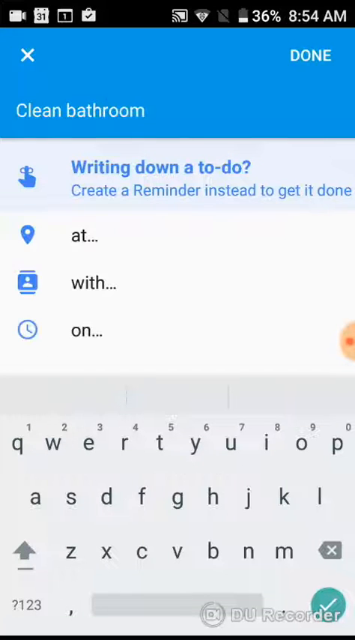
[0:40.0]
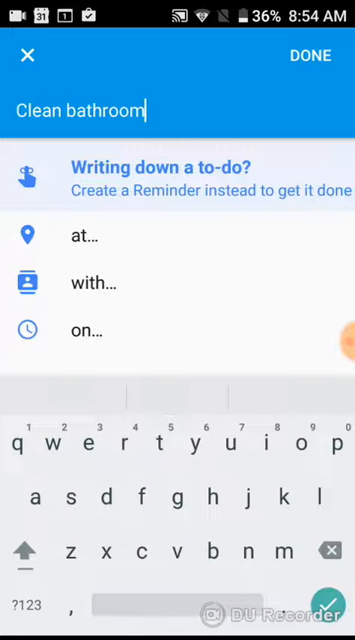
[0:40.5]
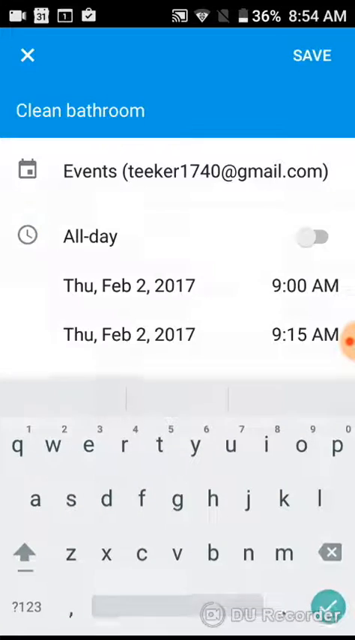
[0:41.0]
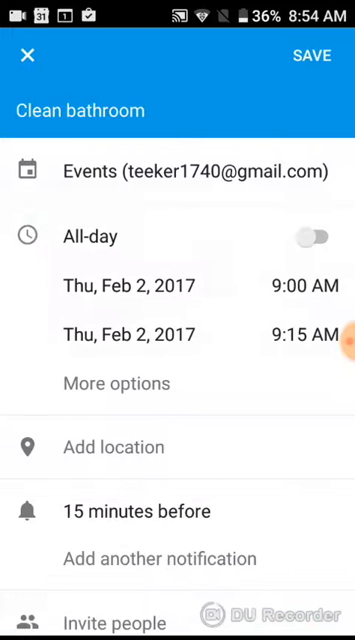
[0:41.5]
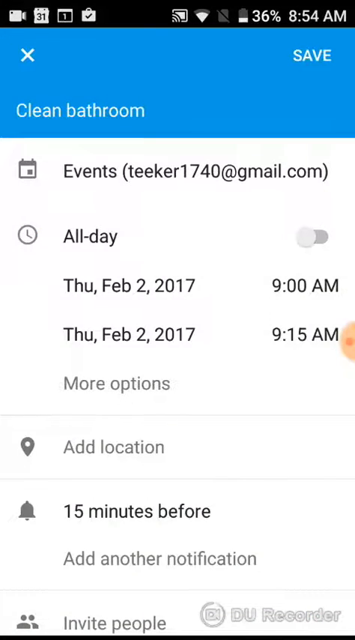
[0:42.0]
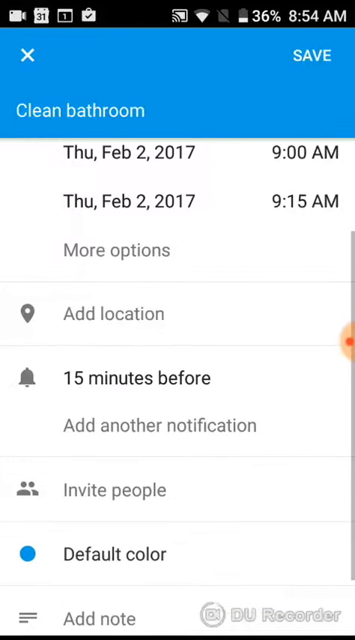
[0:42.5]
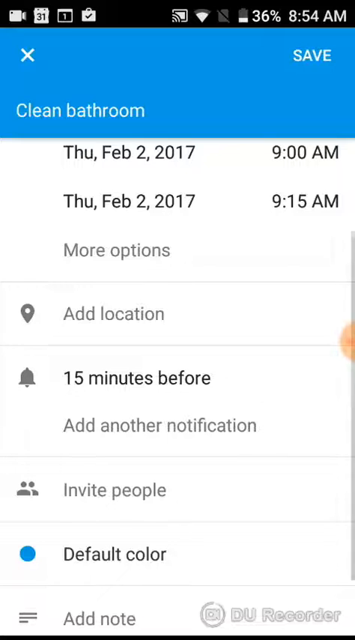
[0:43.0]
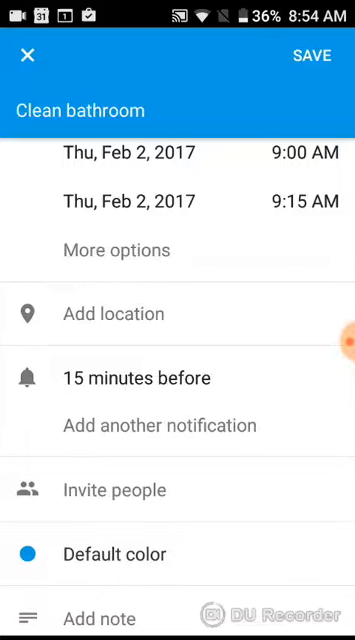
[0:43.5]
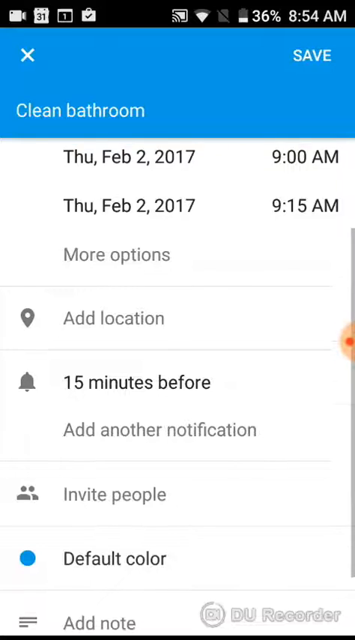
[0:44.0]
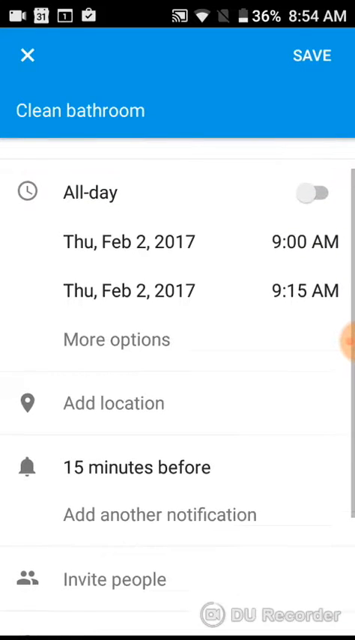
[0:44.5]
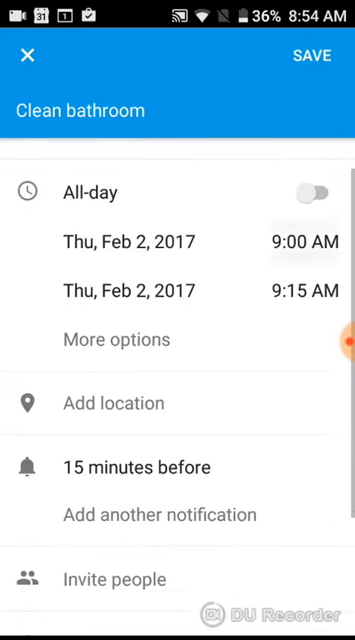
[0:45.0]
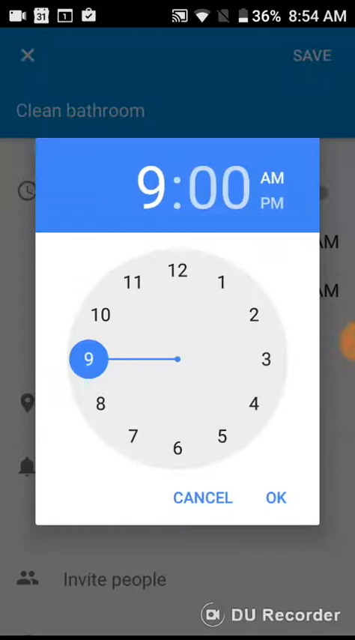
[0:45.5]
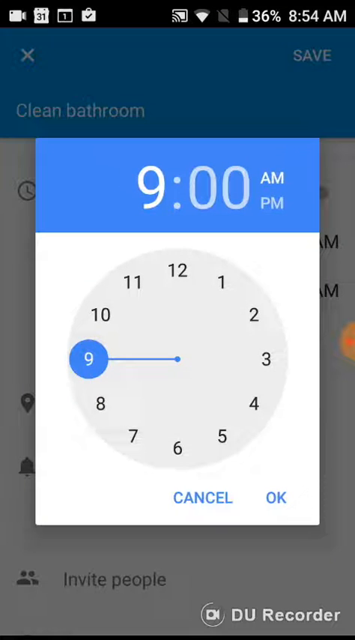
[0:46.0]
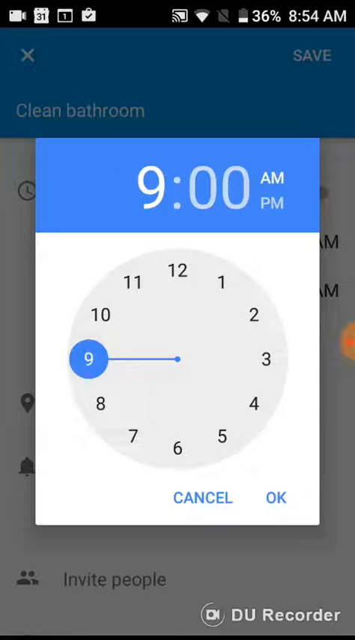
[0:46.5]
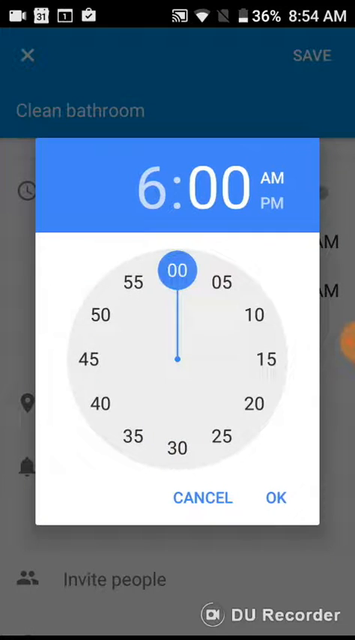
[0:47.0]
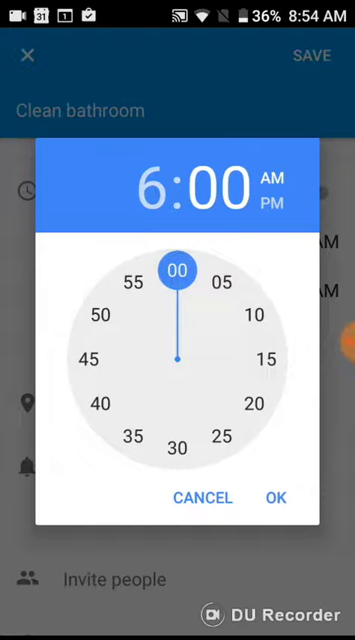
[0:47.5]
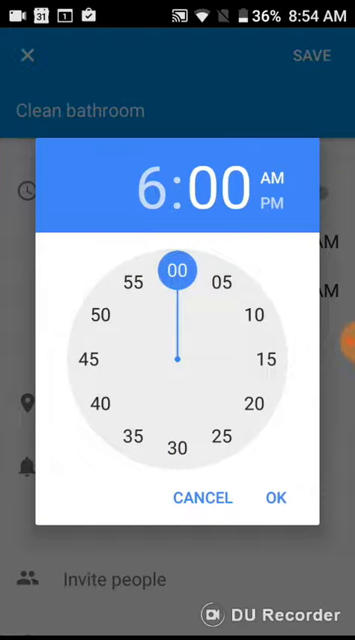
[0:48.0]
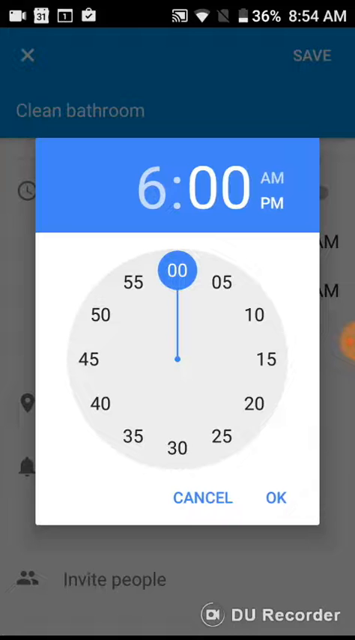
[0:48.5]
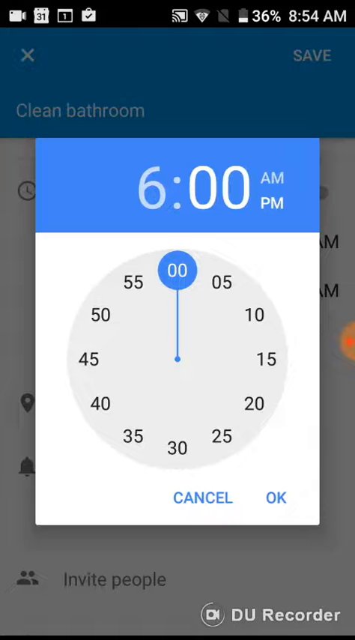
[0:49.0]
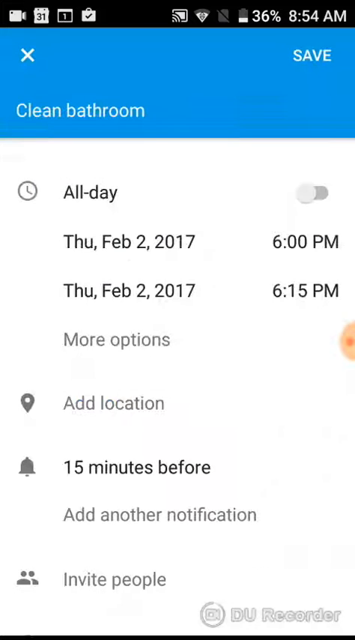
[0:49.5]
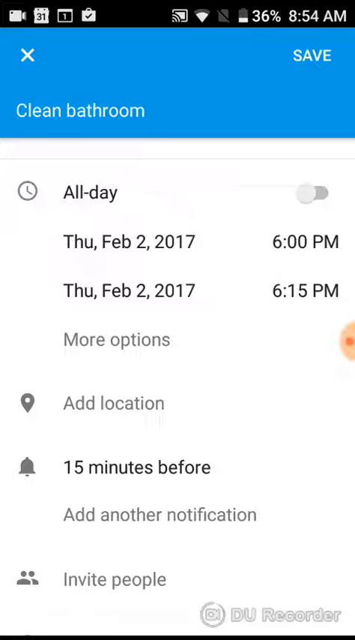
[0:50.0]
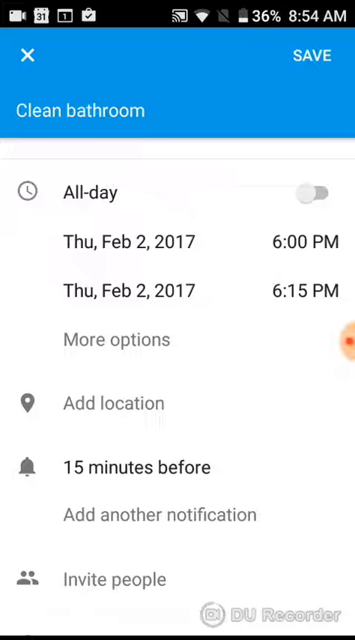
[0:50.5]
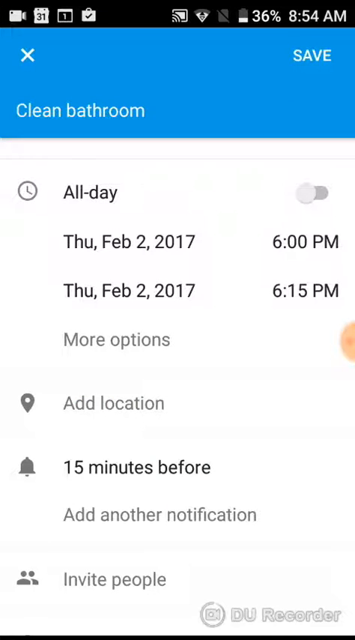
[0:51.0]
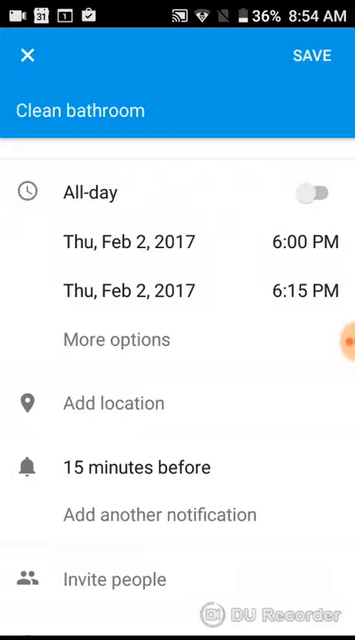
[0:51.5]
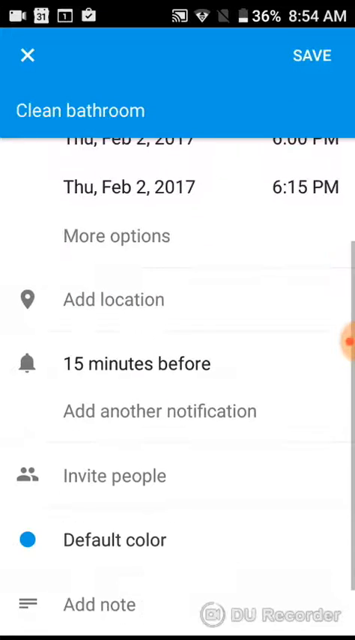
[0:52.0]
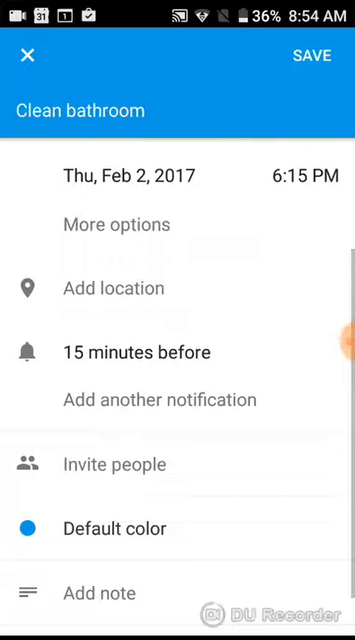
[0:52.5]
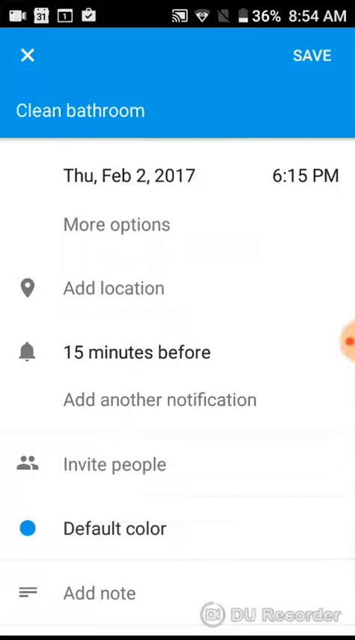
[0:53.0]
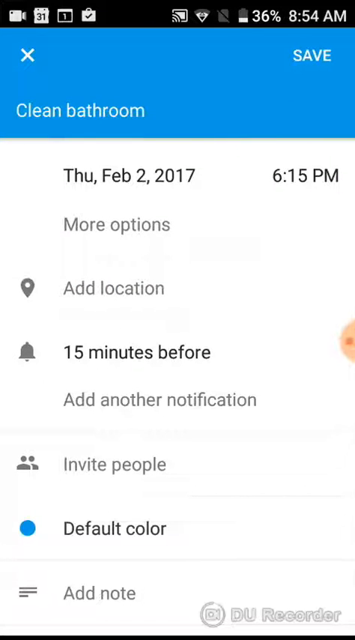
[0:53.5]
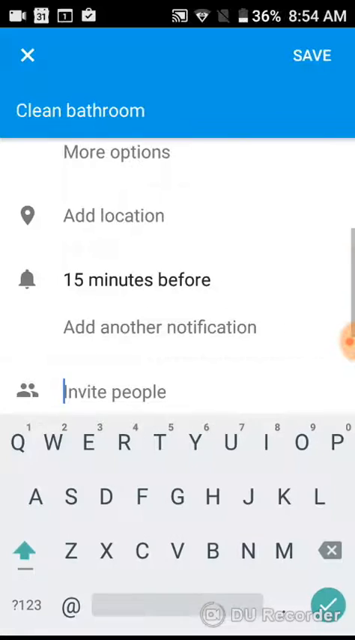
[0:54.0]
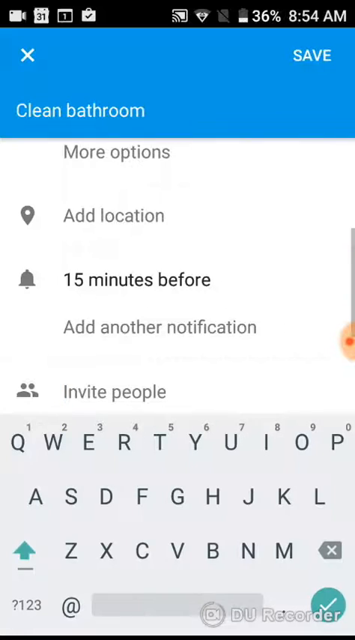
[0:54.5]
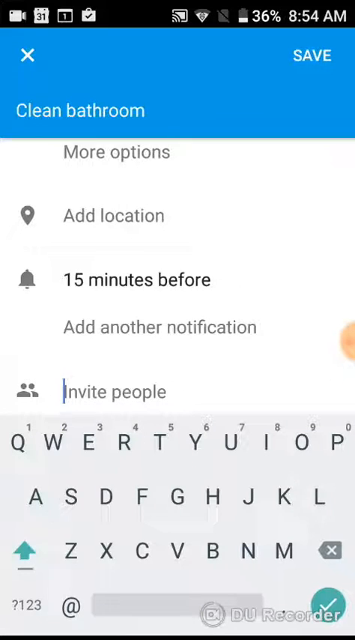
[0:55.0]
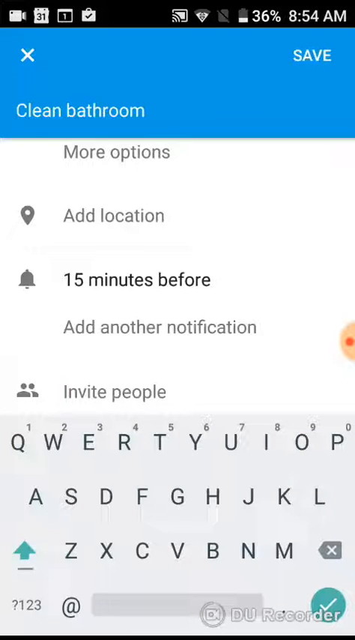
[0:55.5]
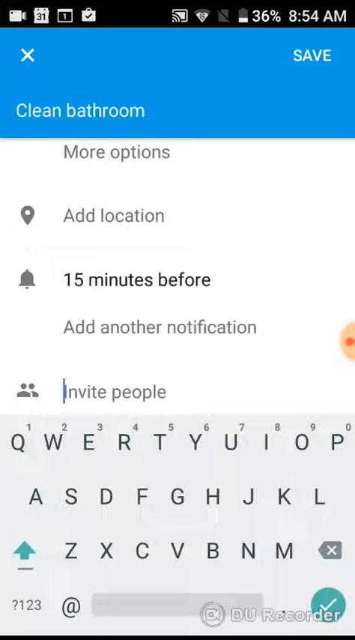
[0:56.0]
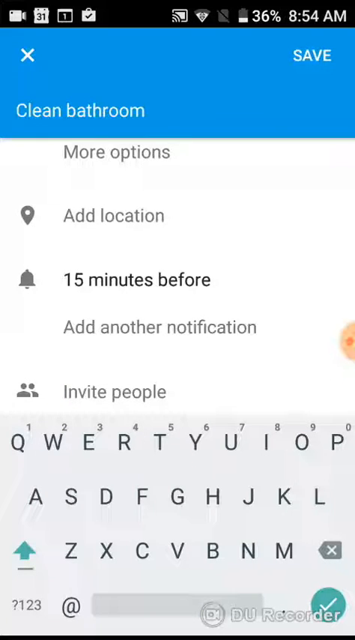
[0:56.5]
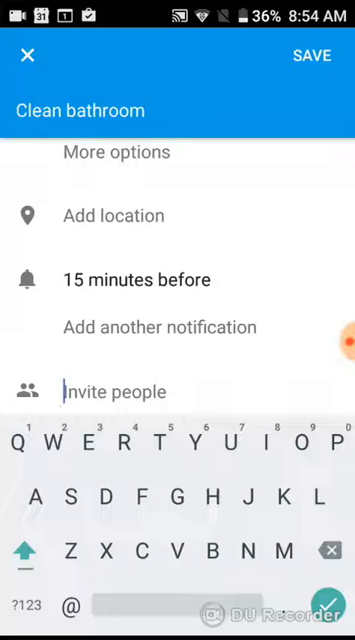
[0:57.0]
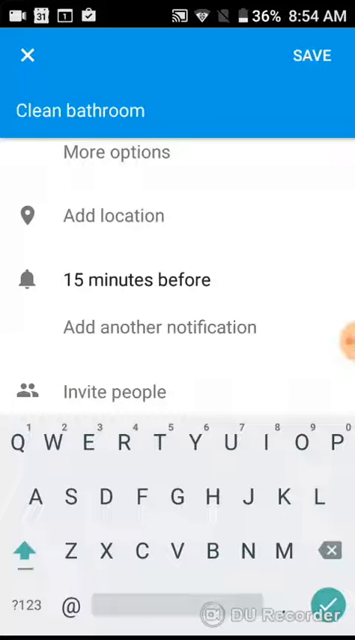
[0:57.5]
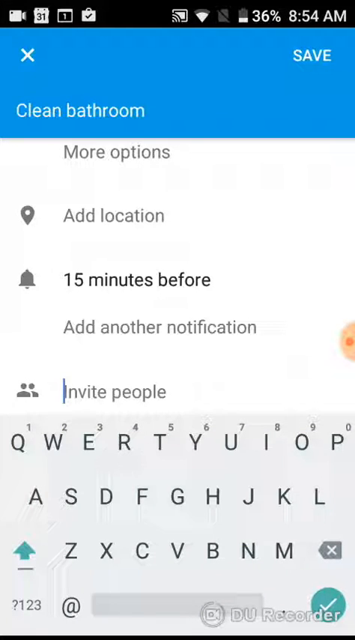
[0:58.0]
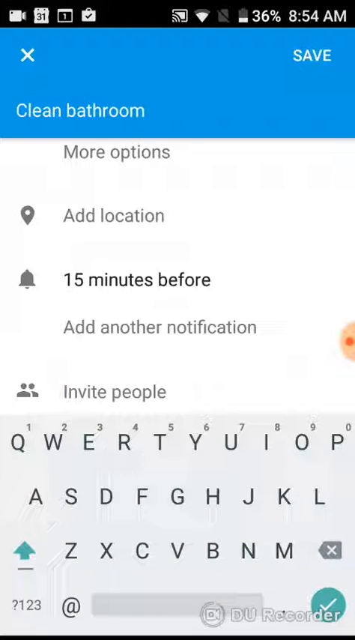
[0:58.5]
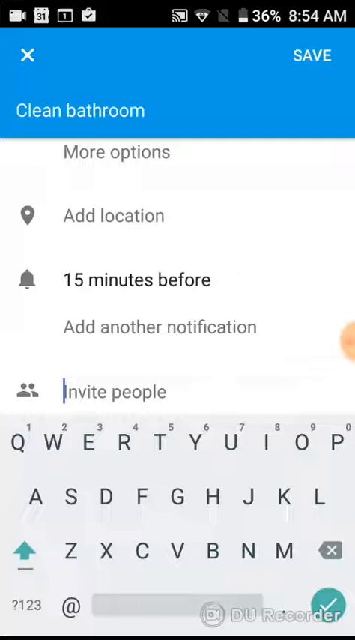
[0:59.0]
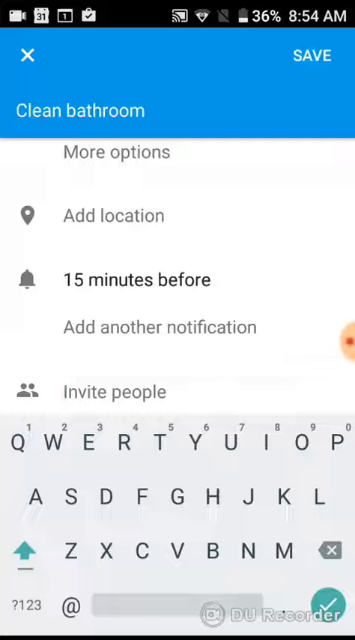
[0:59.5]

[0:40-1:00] The "clean bathroom" event has been created on the calendar for 9am, and the user changes the time to 6pm. The time is chosen with a clock-style picker showing options such as 00, 05, 10 and 15, along with a switch between a.m. and p.m. The user is about to invite people through email and hovers over the invite button. The battery has dropped from 37% to 36%, and the clock reads 8:54 am.